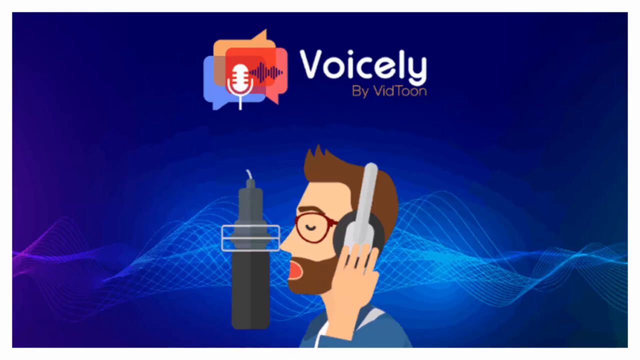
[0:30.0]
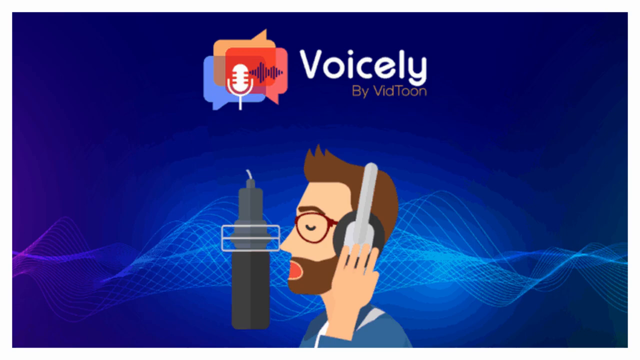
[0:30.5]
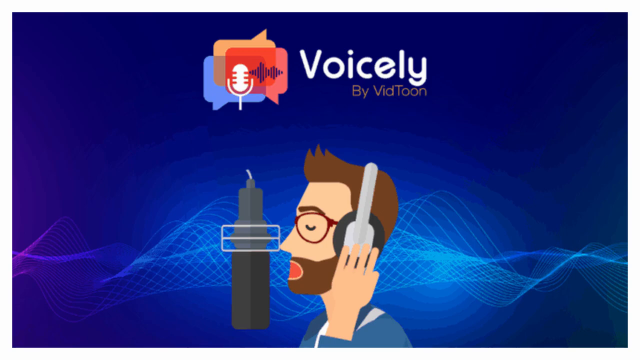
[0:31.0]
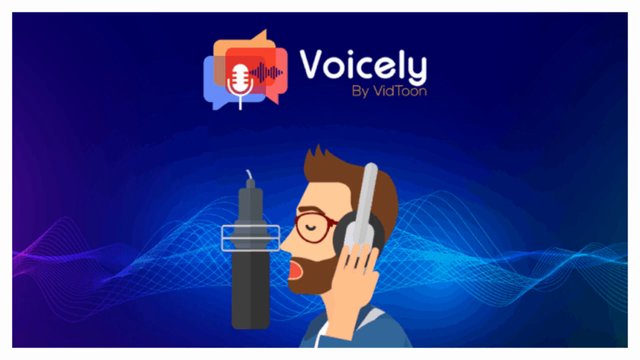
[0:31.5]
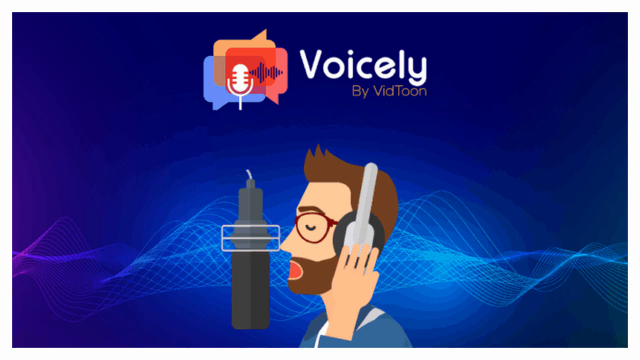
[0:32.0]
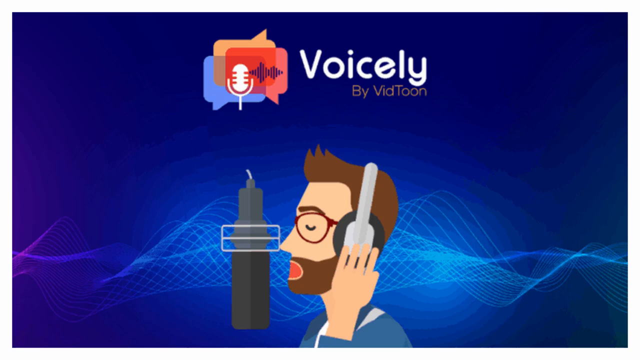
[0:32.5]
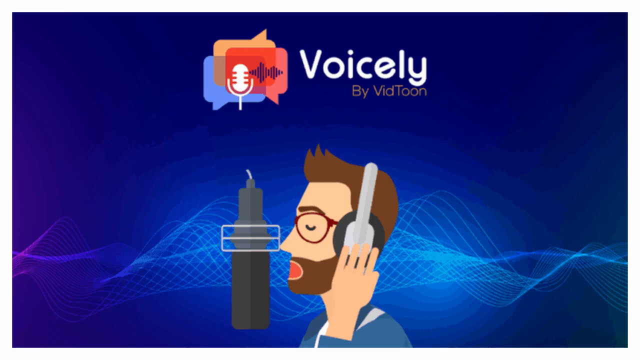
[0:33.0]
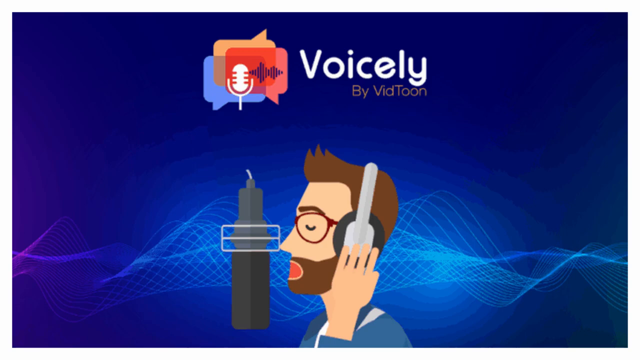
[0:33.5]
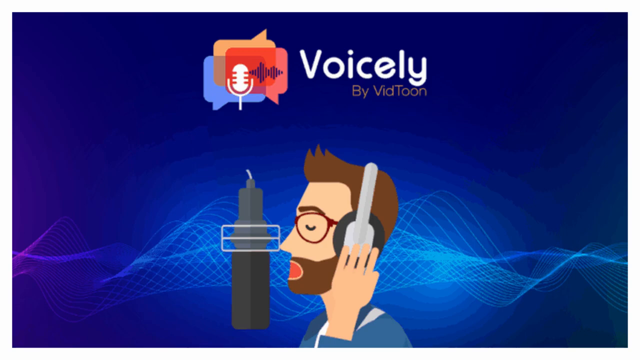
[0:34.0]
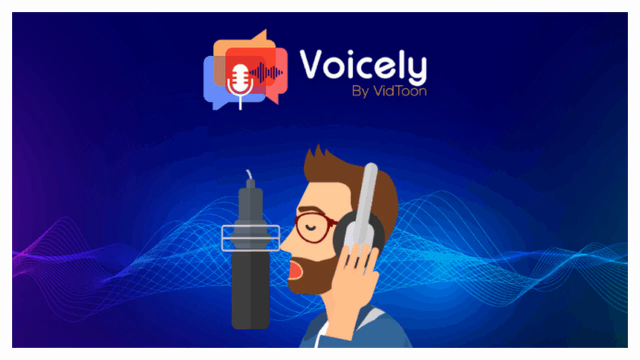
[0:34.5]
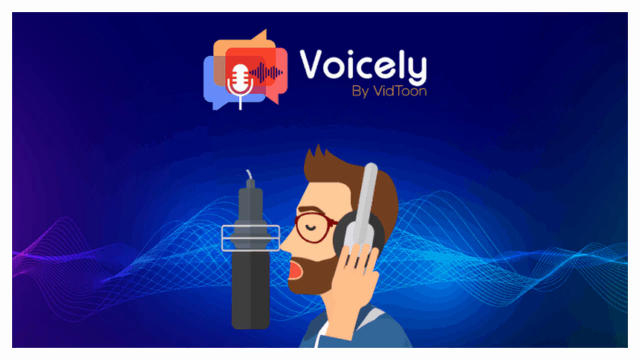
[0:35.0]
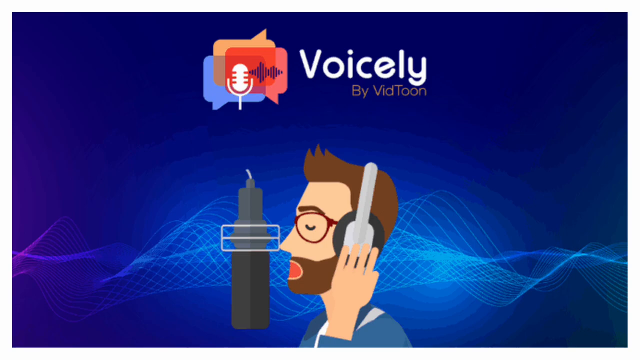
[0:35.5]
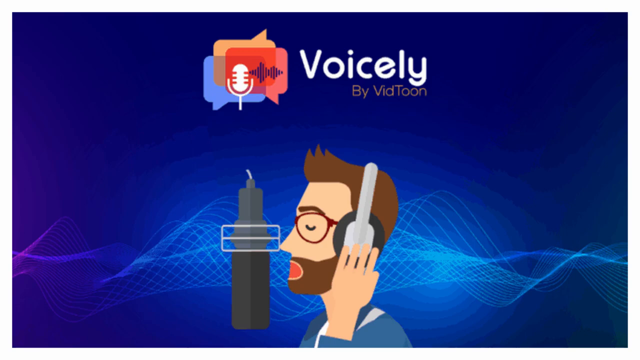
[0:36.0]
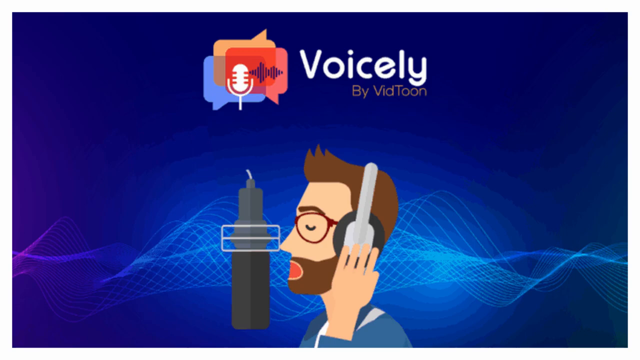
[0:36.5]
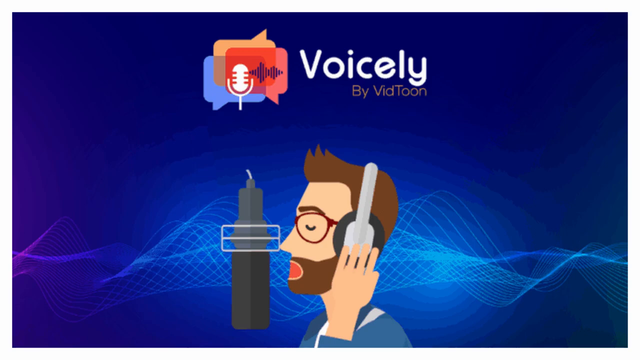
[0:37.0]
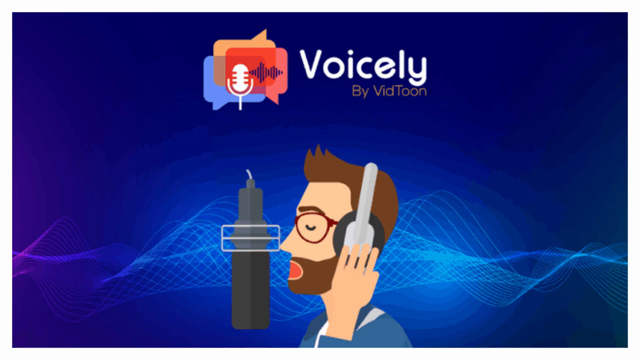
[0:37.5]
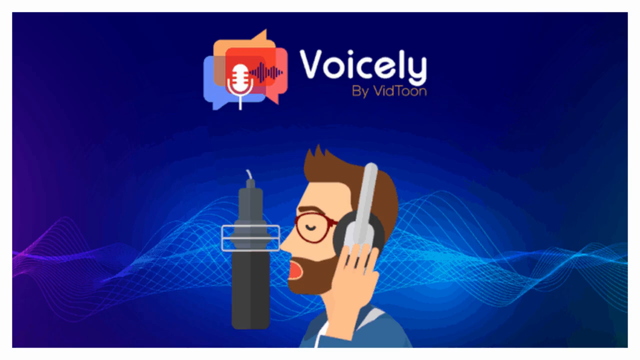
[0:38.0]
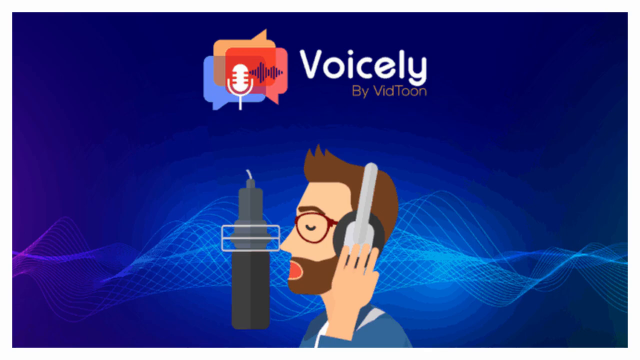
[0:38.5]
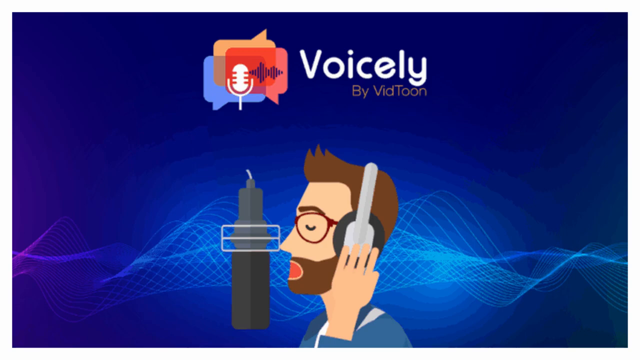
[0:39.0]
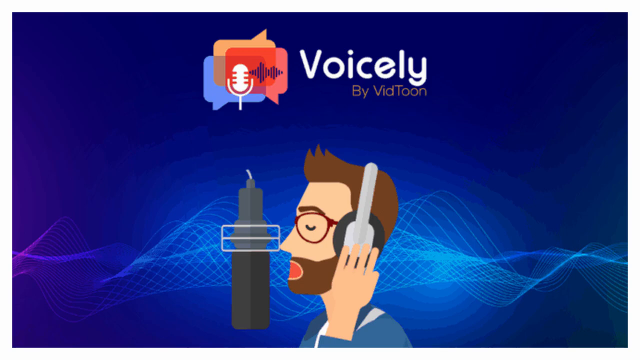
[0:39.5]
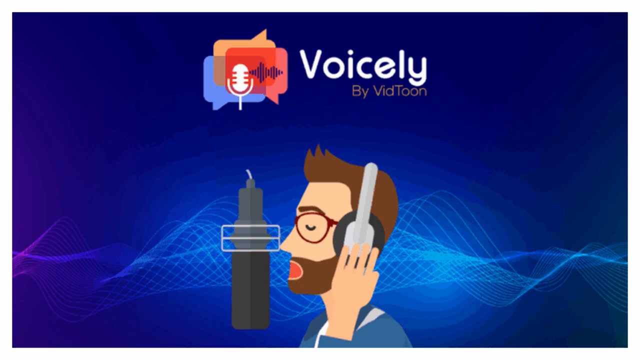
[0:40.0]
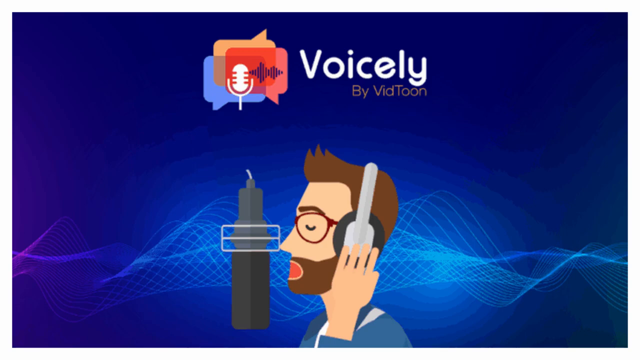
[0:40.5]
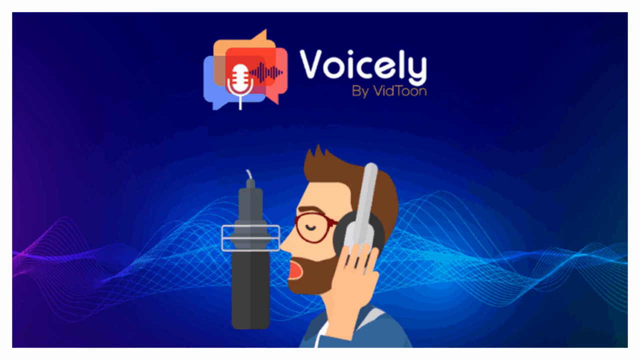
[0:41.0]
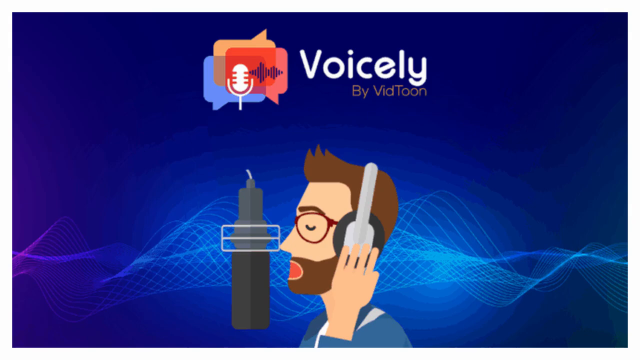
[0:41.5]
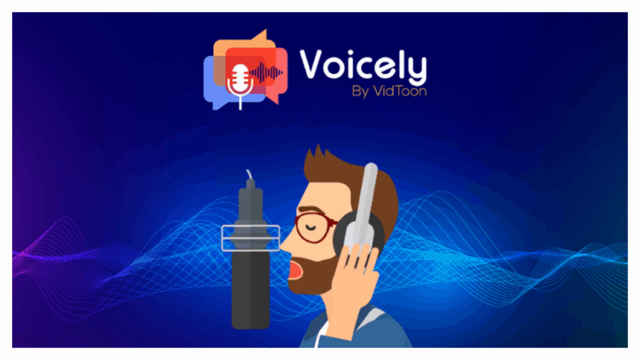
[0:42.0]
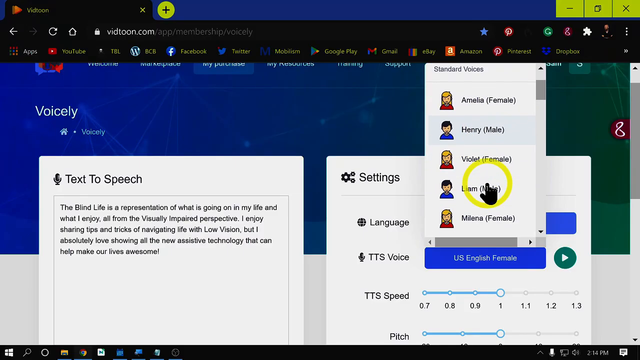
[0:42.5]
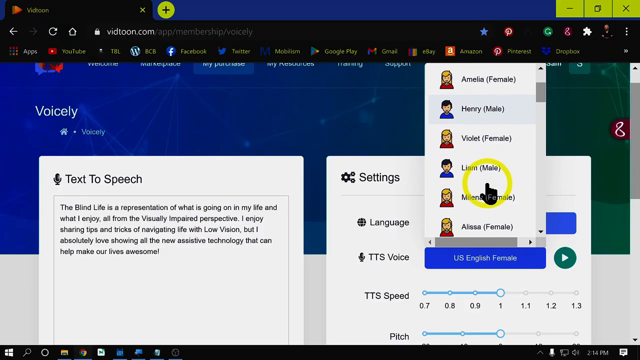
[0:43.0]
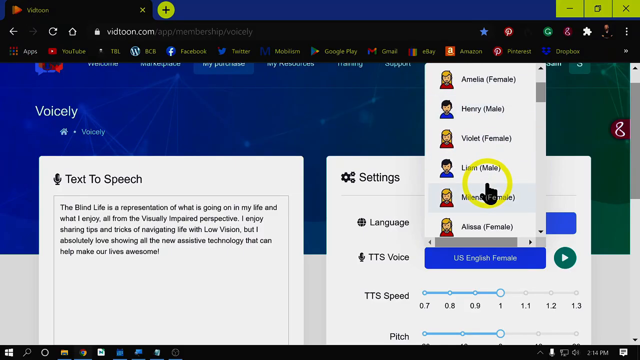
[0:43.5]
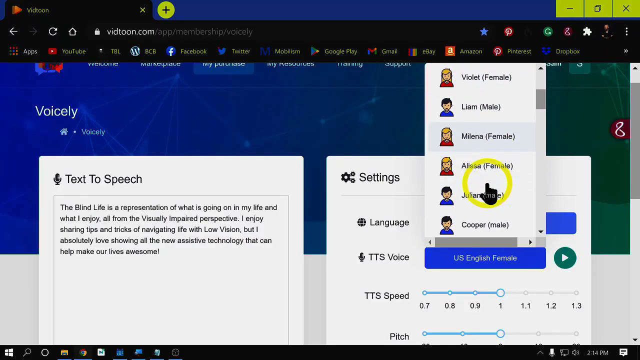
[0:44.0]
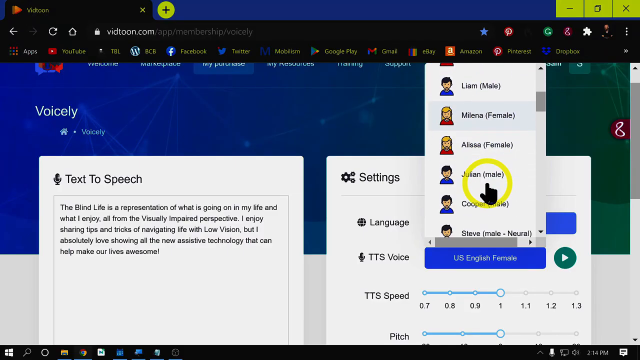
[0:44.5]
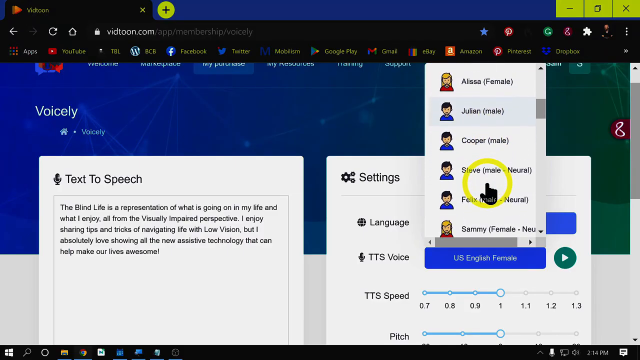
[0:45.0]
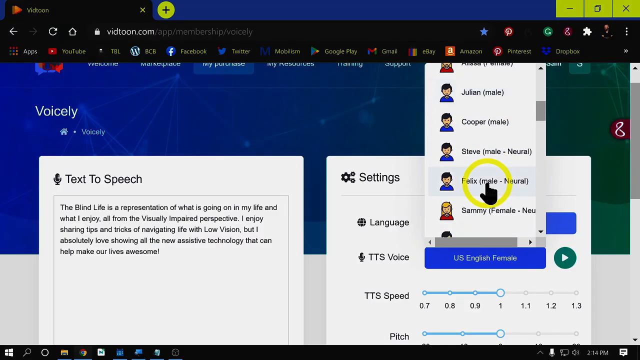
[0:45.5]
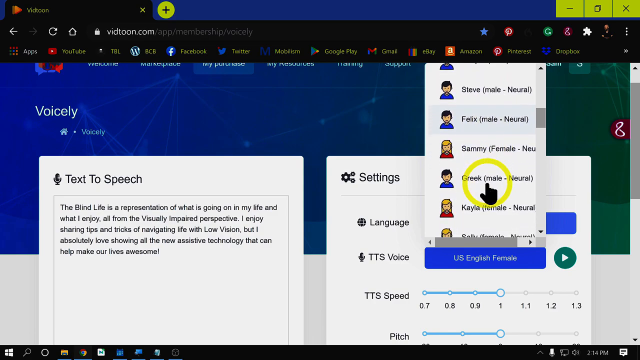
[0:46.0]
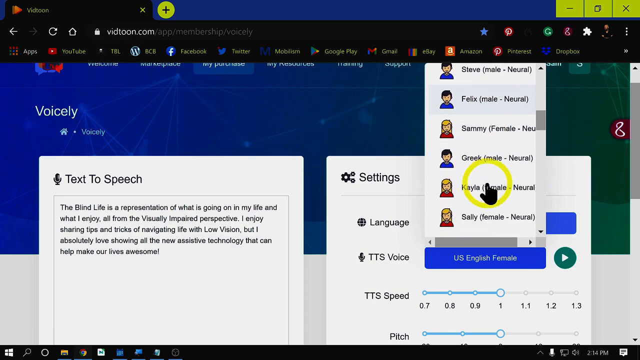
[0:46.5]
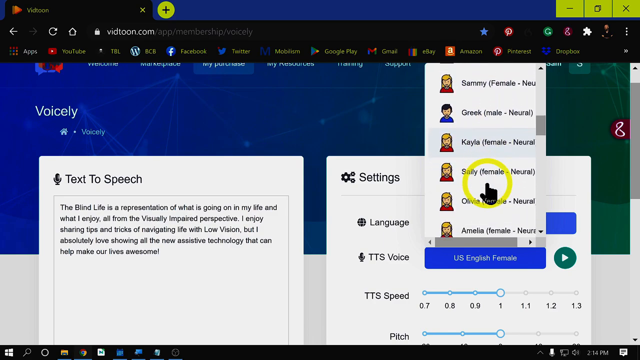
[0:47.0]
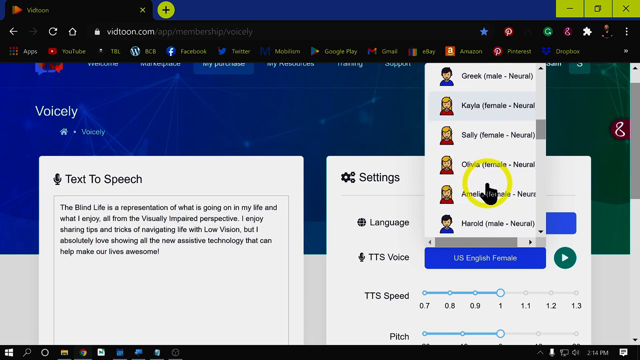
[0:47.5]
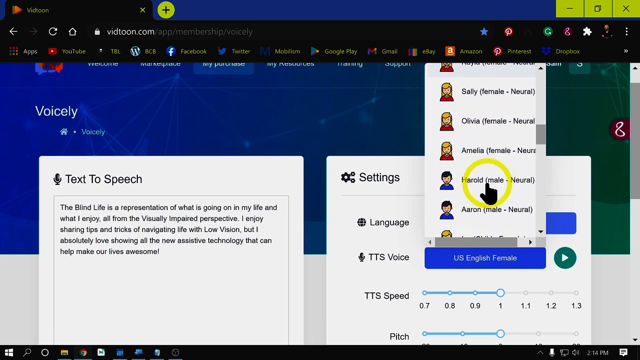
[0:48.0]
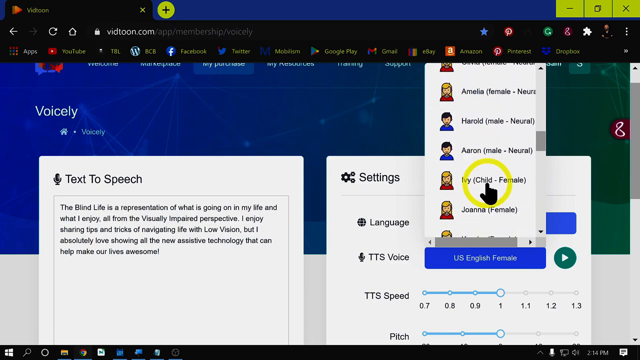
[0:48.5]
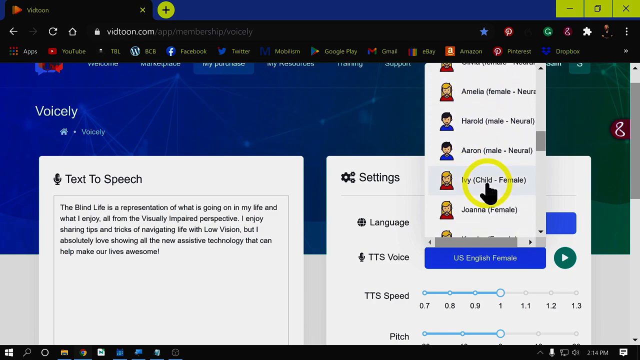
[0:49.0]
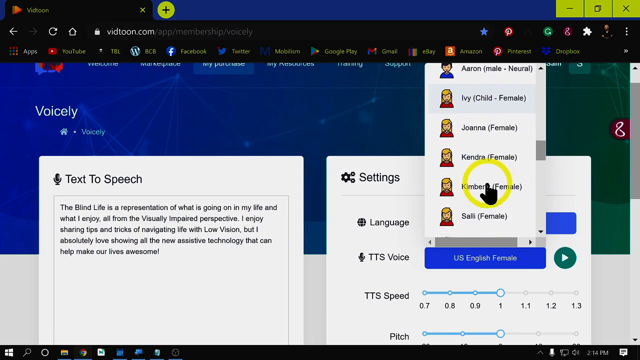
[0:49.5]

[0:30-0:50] The image of the man speaking into a microphone stays on screen for several seconds. Next, a computer screen shows Voicely, with text in the text-to-speech box. The text says: "the blind life is a representation of what is going on in my life and what I enjoy, all from the visually impaired perspective. I enjoy sharing tips and tricks of navigating life with low vision, but I absolutely love showing all the new assistive technology that can help make our lives awesome." On the right-hand side of the screen is a dropdown of names, including Amelia, female; Henry, male; Violet, female; and so on. A yellow circle hovers over the name Liam, as if the user is choosing which persona to select. The user scrolls down the list, hovering over different names.